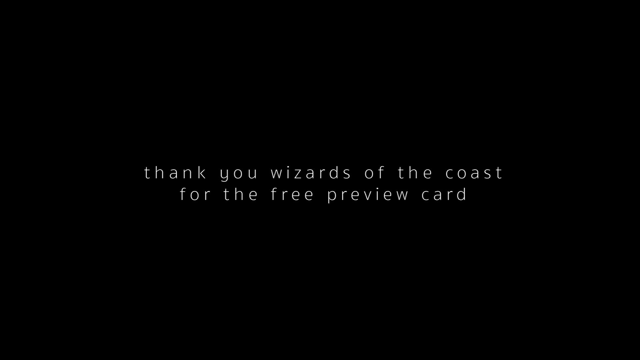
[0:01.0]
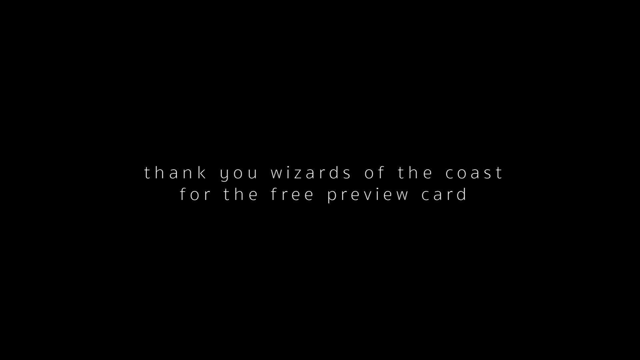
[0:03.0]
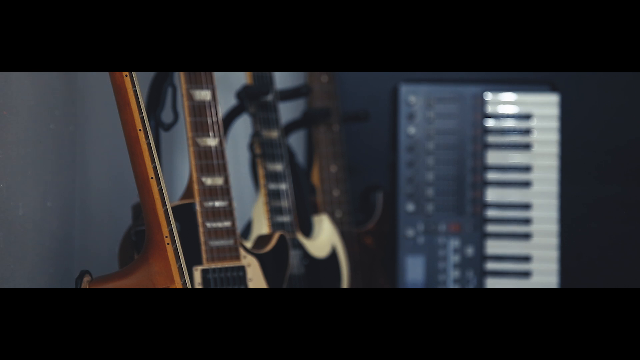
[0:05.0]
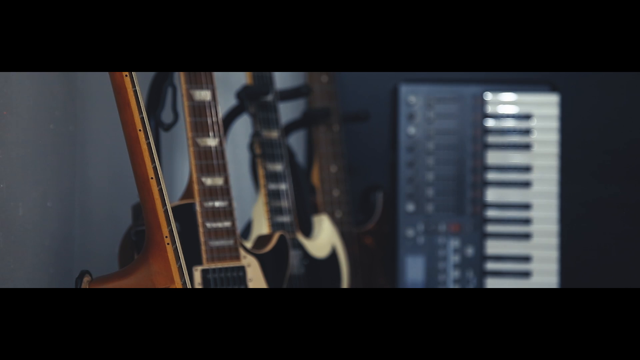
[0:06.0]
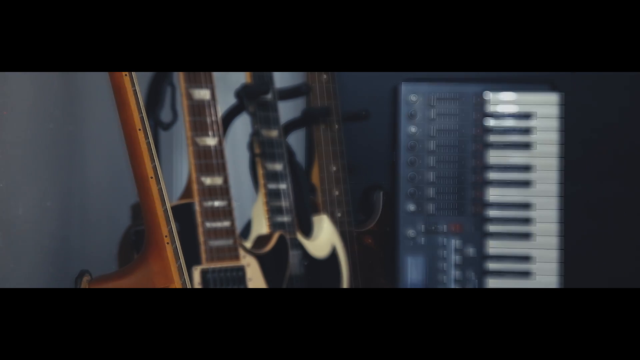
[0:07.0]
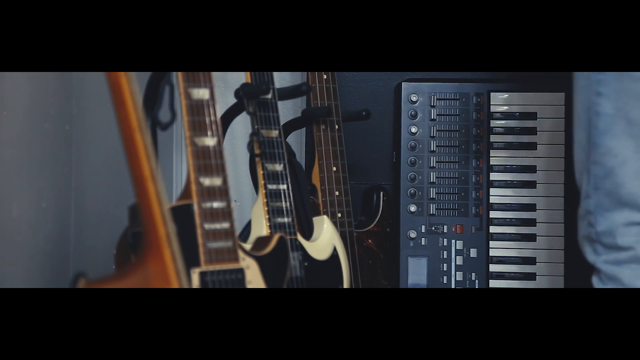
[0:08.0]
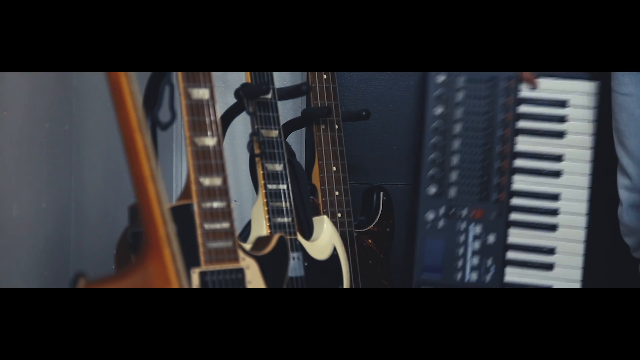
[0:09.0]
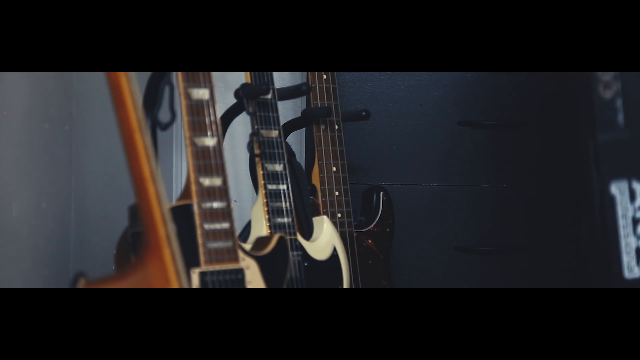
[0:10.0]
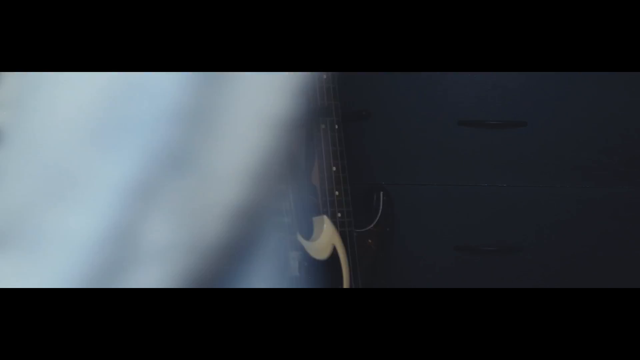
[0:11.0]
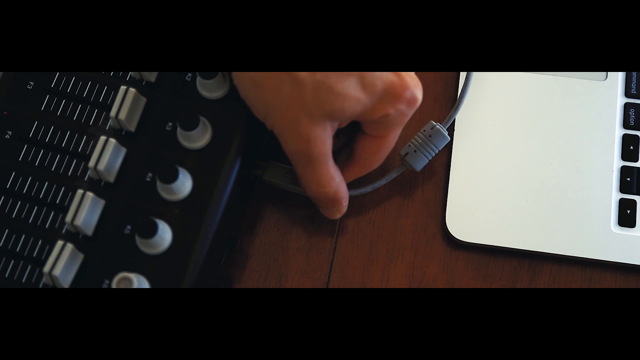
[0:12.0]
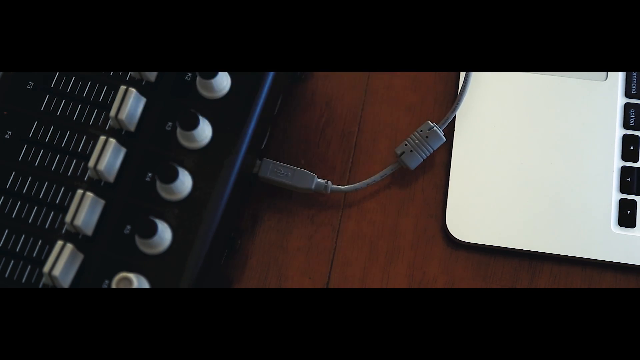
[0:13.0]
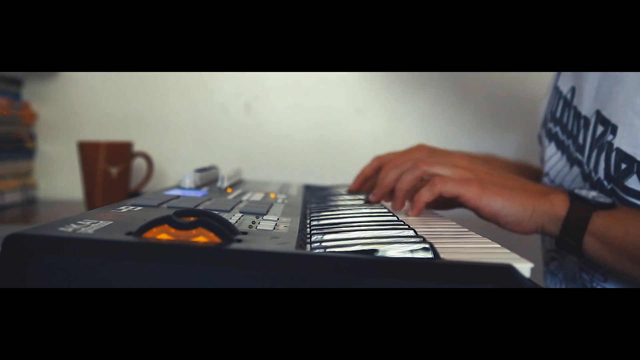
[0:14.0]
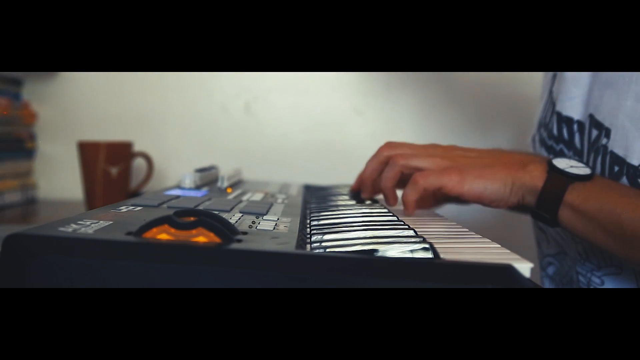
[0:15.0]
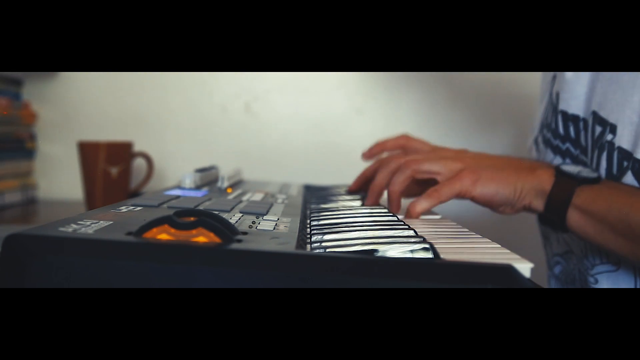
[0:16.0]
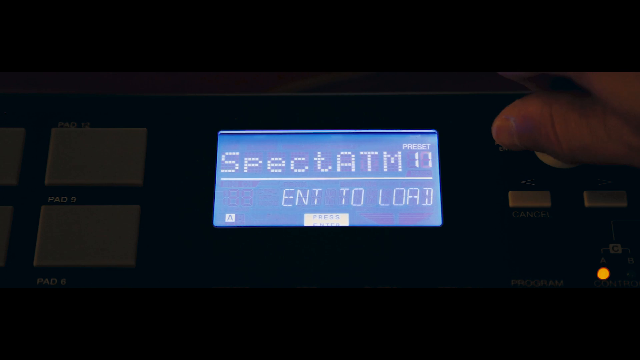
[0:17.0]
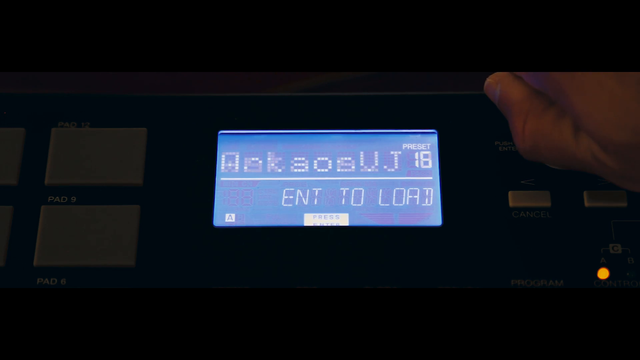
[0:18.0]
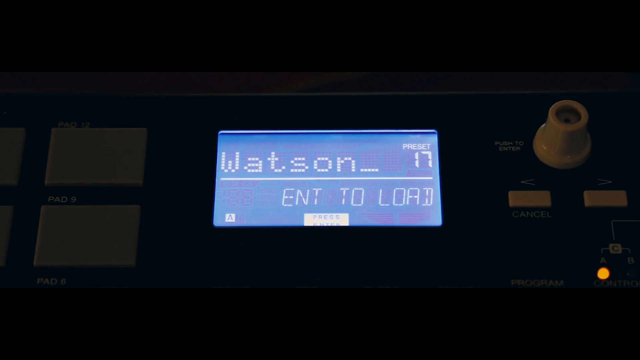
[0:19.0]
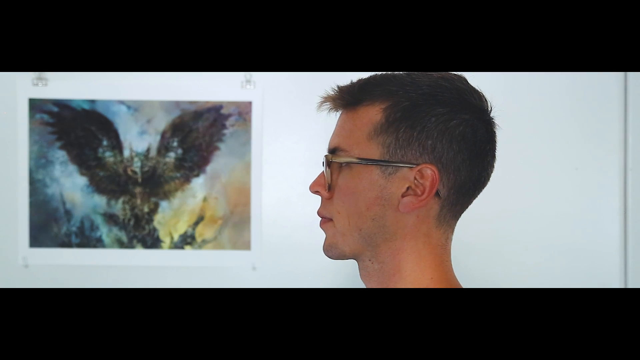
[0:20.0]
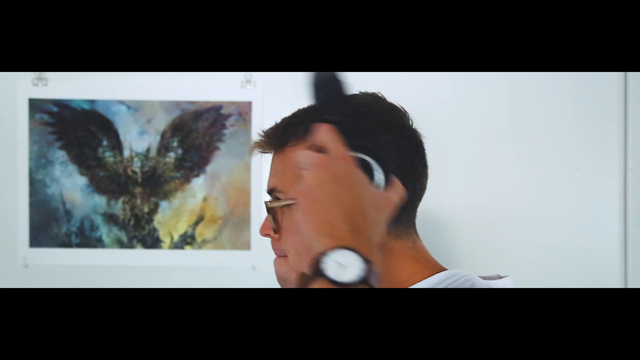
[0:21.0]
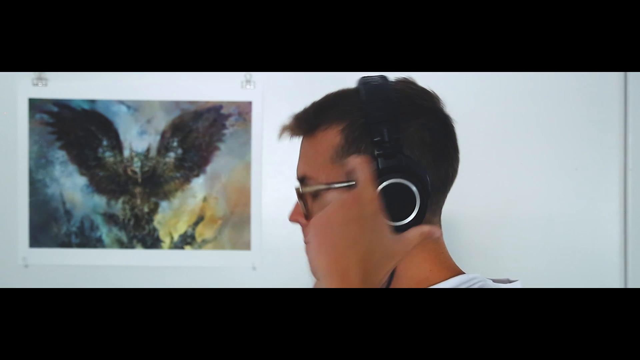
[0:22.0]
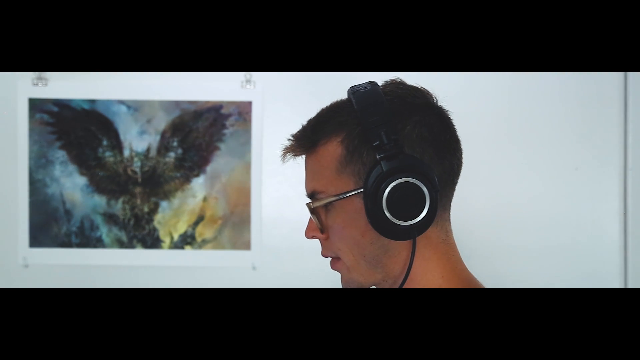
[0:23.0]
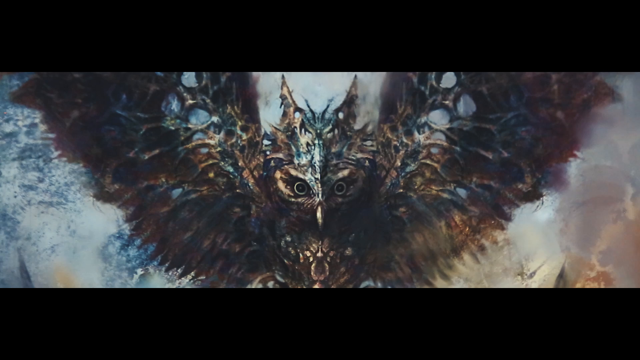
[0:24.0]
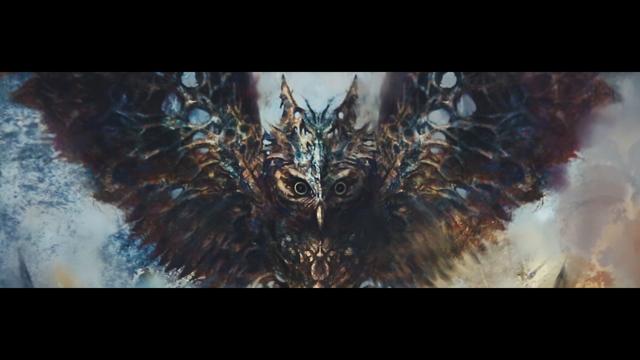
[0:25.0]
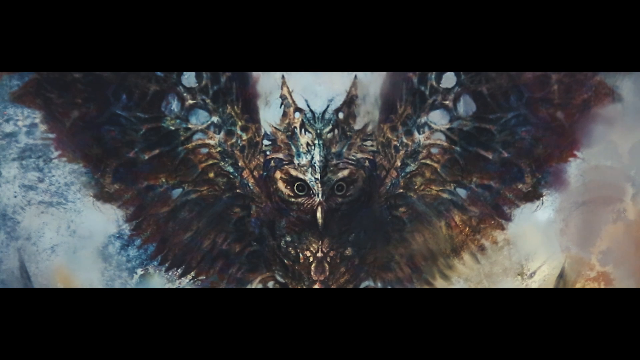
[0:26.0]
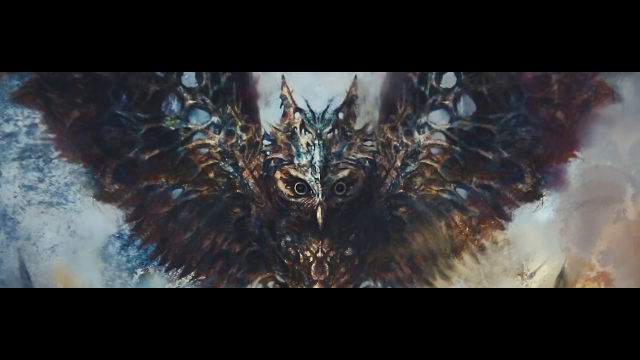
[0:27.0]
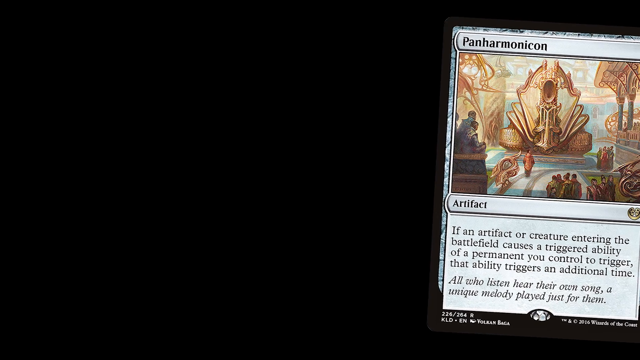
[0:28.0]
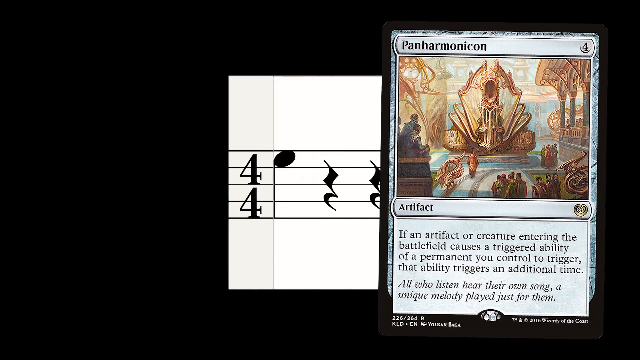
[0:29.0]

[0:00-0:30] A black screen shows centered white lowercase text reading "thank you, Wizards of the Coast" with a second line reading "for the free preview card." The screen goes all black. Next, three or four guitars are visible with a keyboard to the right of them; they are all standing up straight, but only about half of them is visible, the rest cut off by the frame, which has black bars at the top and bottom. A person in jeans walks into the frame on the right, their hand grabs the keyboard from the top, and they walk across the screen from right to left, with mostly just their legs visible. An overhead shot then shows what looks to be some sort of soundboard on the left side, mostly black with white knobs, on a wooden table. A person's hand comes in from the top left and plugs a gray wire into it. On the right side of the screen is the end of a white laptop, with its black keys visible further to the right; the touchpad area is too far toward the top to be seen. A side-profile view of a keyboard follows, with the person on the right playing it with both hands; they wear a black watch on their left hand and a white shirt with blue text that cannot be read. A close-up of the soundboard shows a little screen in the middle glowing blue with white text that changes too quickly to read as the person, seen only by their hand, turns a knob in the top right corner. A side-profile shot then shows the head of a white man with short black hair and glasses looking toward the left, where there is a painted picture of a beast with wings, possibly a made-up creature; the rest of the background is a white wall. He puts on black headphones and looks down. A close-up of the beast shows that it kind of looks like an owl, covered in a dark, rainbow-like mix of colors. The screen turns black and a mostly white card appears from the right. Its picture, in the center top, almost looks like a futuristic shrine, with a sort of golden statue-like figure, pillars on the right side, and people sort of walking below the shrine. The text at the top of the card reads "Panharmonicon." A small white rectangle with a music chart appears on the left, with black notes scrolling quickly across it from right to left.